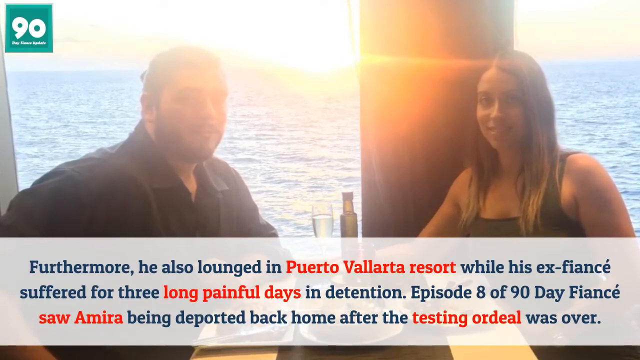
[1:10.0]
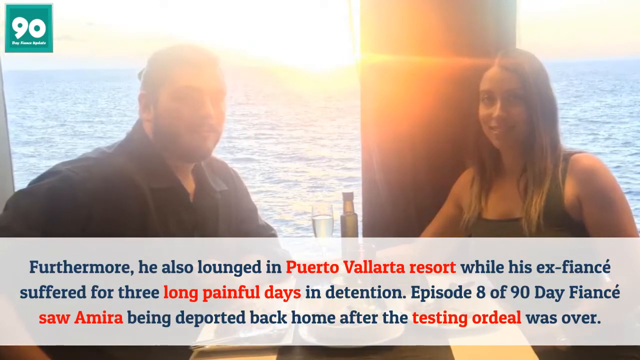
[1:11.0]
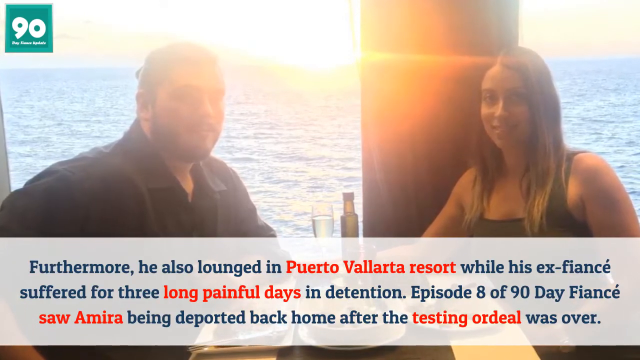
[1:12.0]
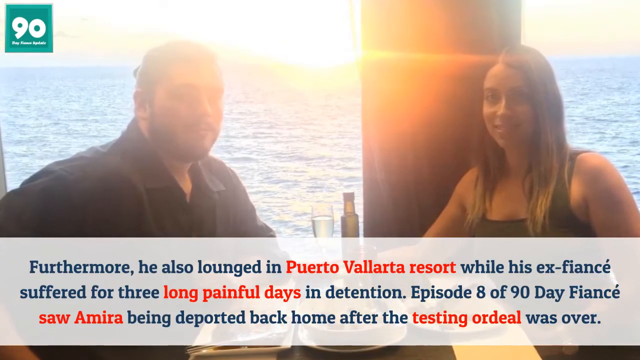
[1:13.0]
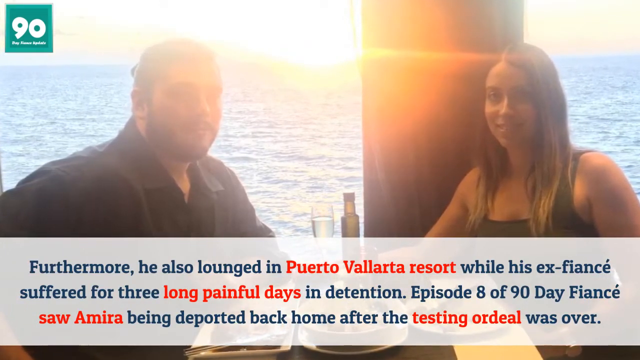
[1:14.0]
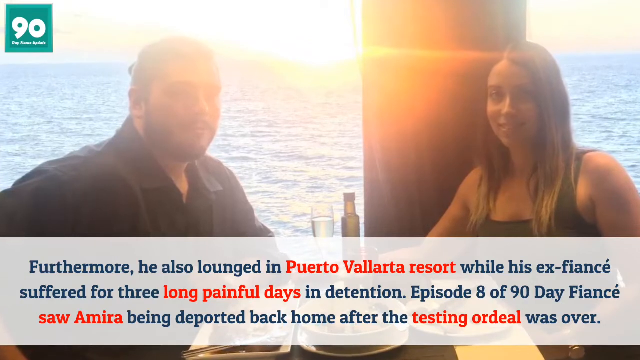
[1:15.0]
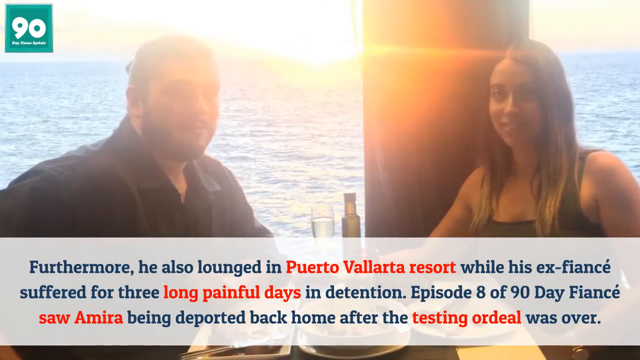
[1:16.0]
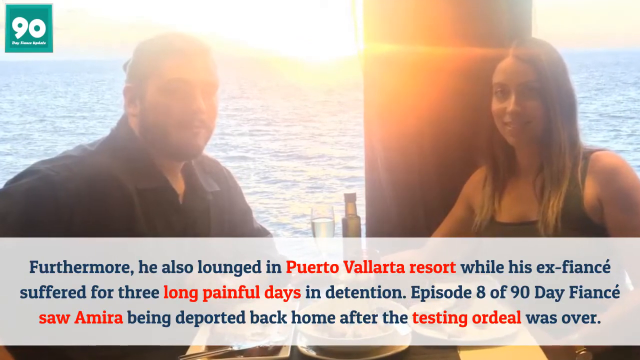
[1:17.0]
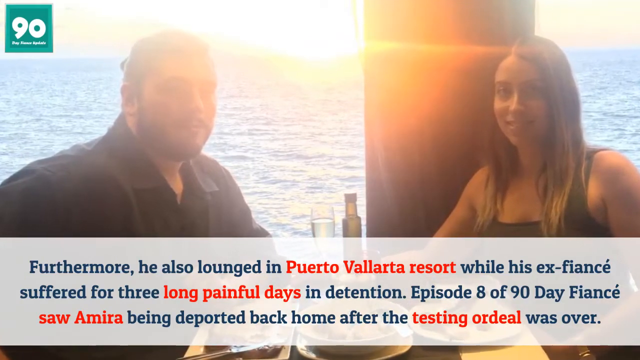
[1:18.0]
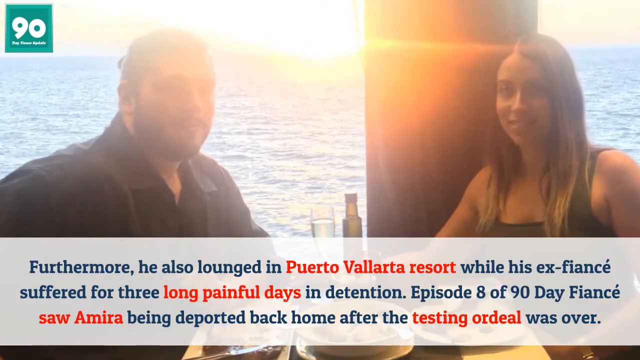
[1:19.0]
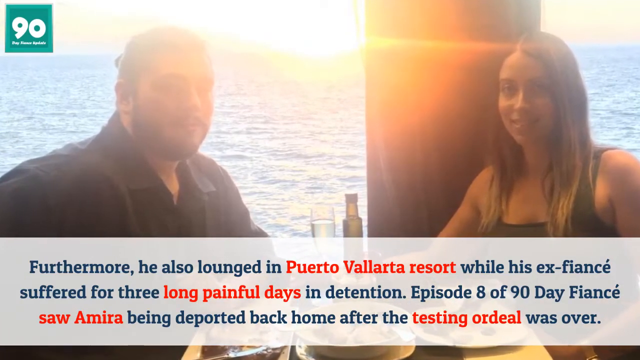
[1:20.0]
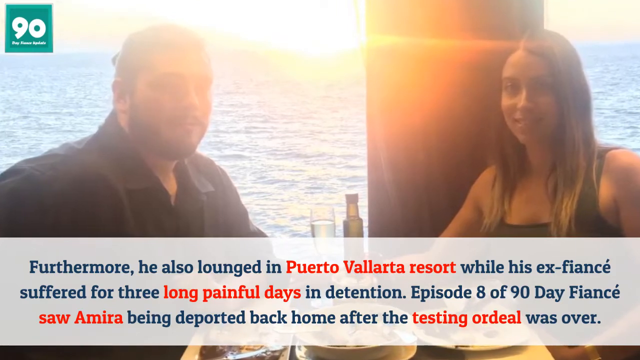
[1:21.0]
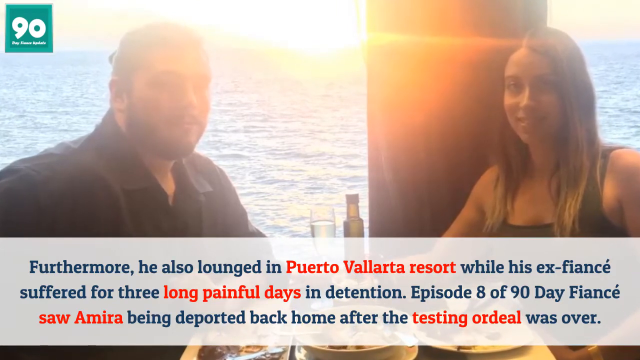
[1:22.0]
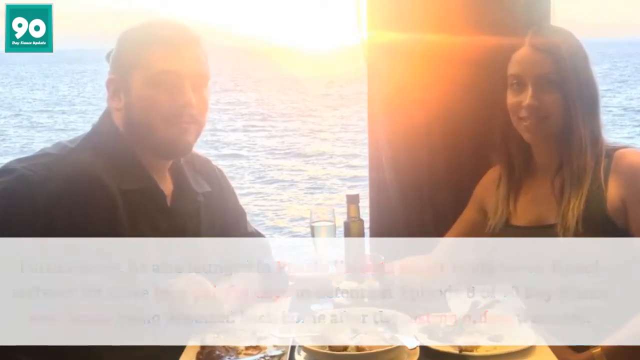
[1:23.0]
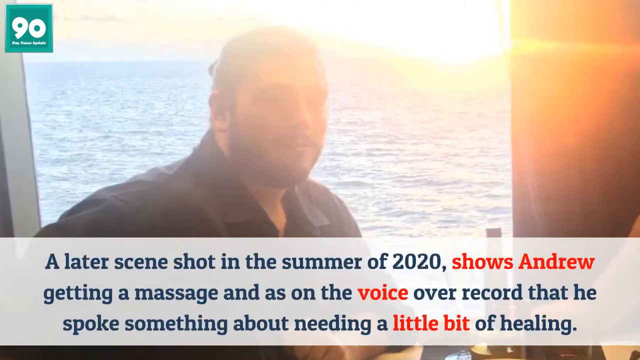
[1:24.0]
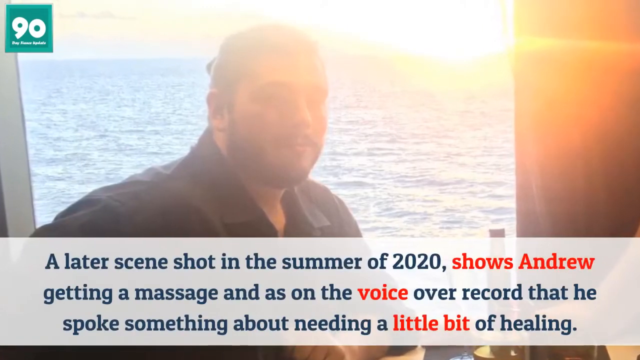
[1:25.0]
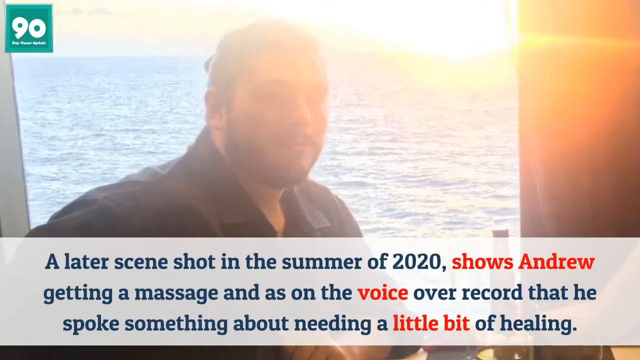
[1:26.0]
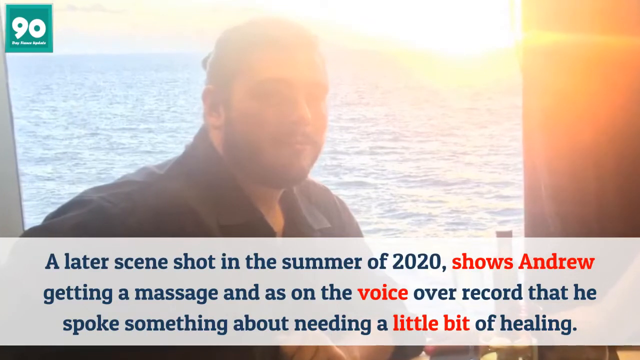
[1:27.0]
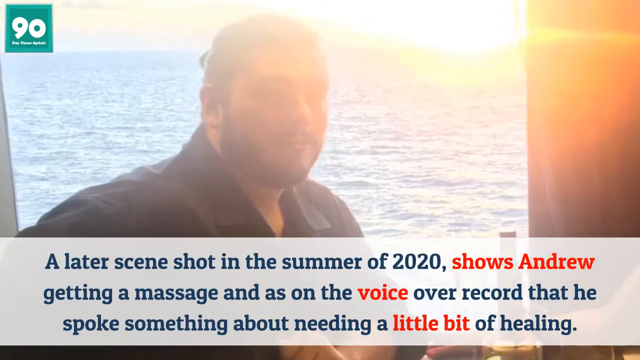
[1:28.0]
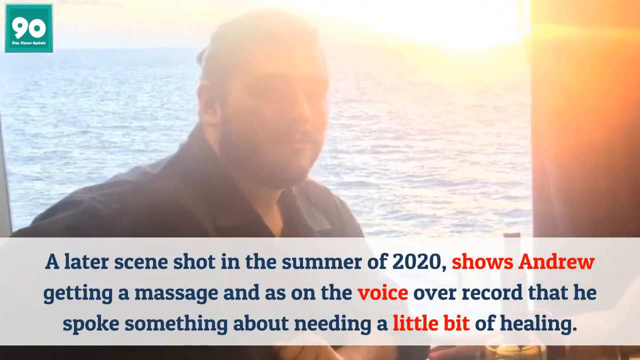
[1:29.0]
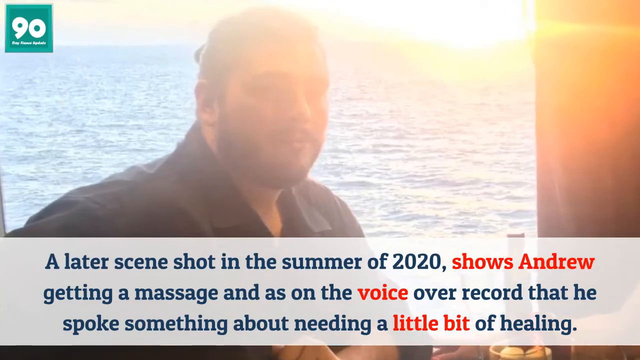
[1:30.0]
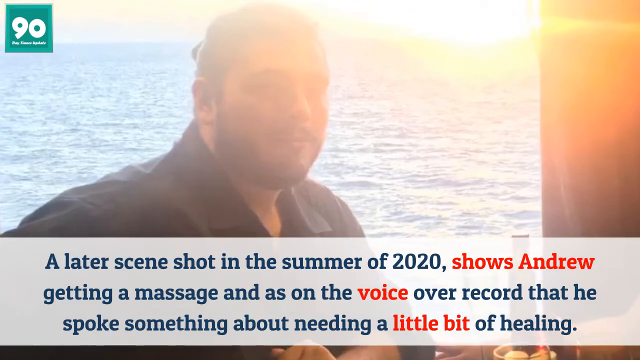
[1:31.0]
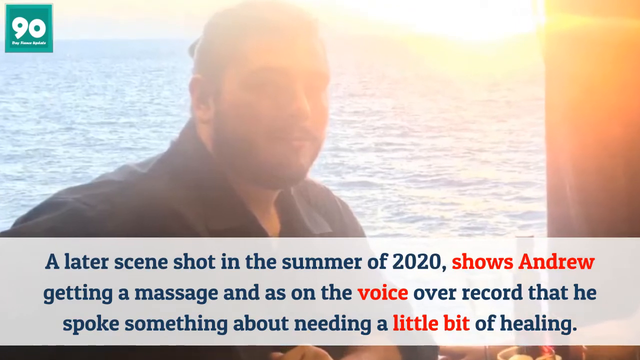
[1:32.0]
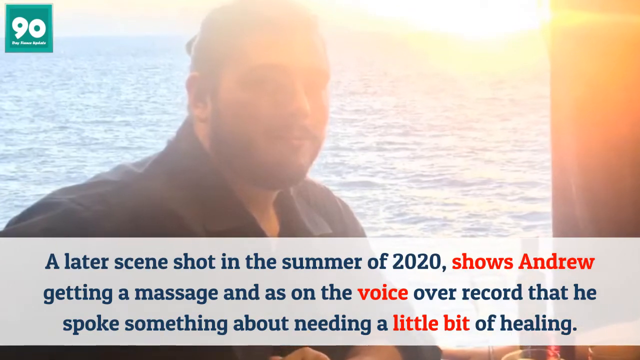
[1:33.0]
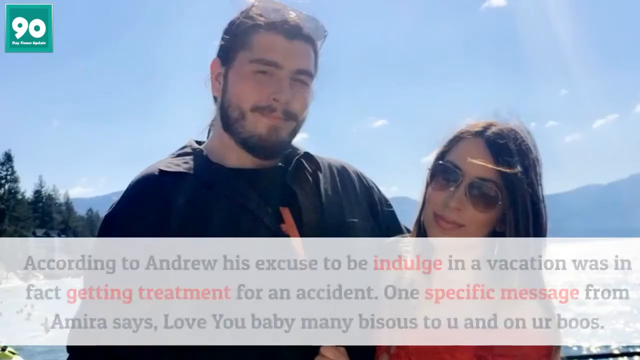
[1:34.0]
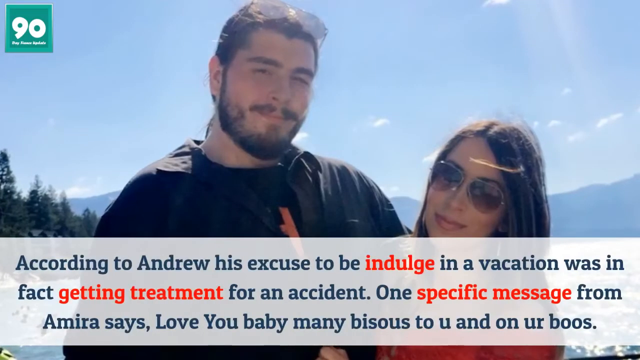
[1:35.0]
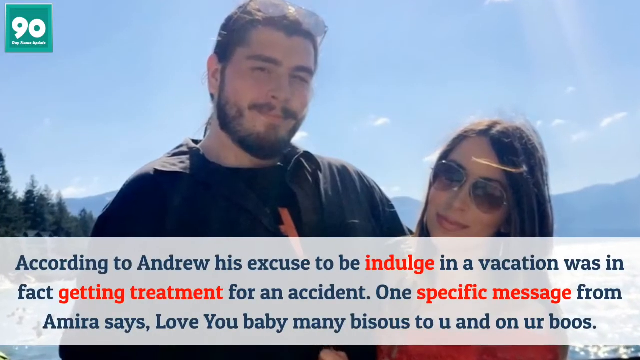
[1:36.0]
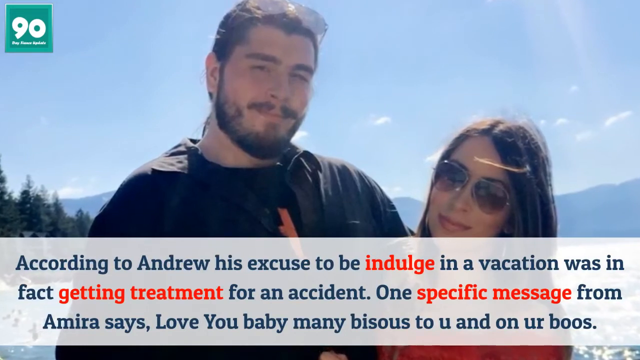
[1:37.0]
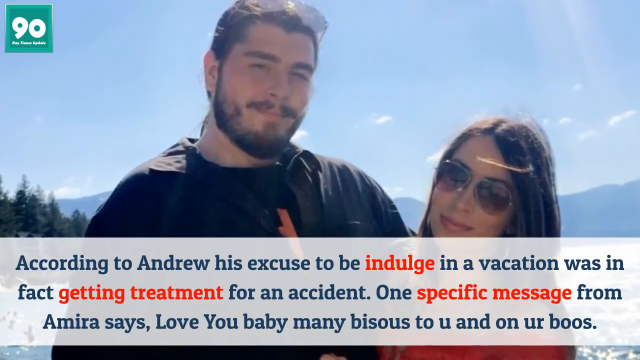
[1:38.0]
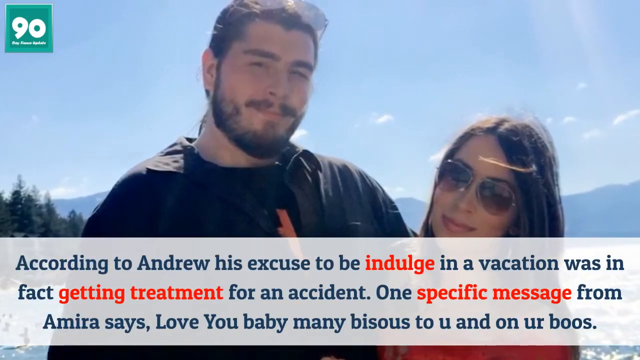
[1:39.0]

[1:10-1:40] The picture of Andrew and Amira on the romantic date stays on screen. They are sitting in a restaurant with an ocean view, with wine glasses on the table, and they seem to be enjoying a steak dinner. The camera zooms in on the picture and focuses solely on Andrew, and a caption appears: "a later scene shot in the summer of 2020 shows Andrew getting a massage." Another image shows Andrew and Amira standing outside against a mountain scene with green trees on a bright summer day. The caption reads "according to Andrew, his excuse to be indulged in a vacation was in fact getting treatment for an accident. One specific message from Amira says, 'Love you baby, many bisous to u and on ur boos'".